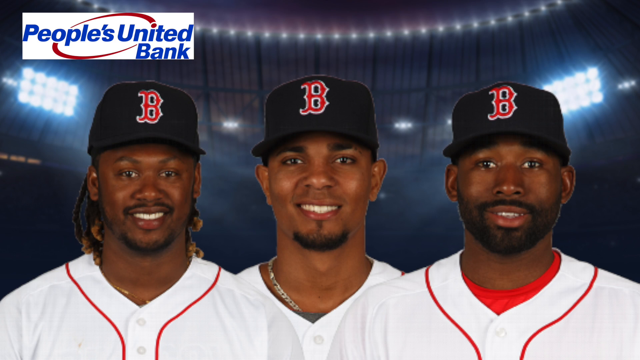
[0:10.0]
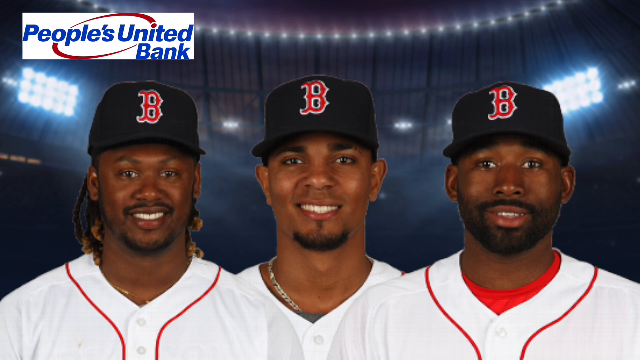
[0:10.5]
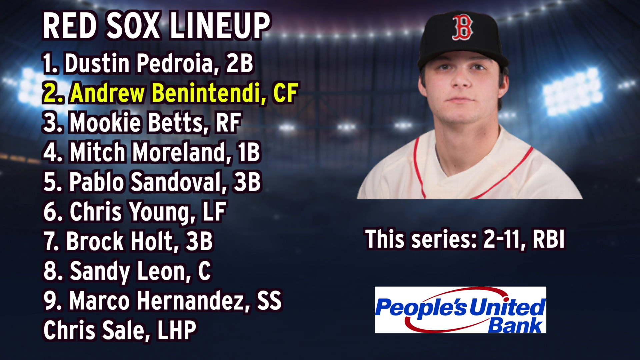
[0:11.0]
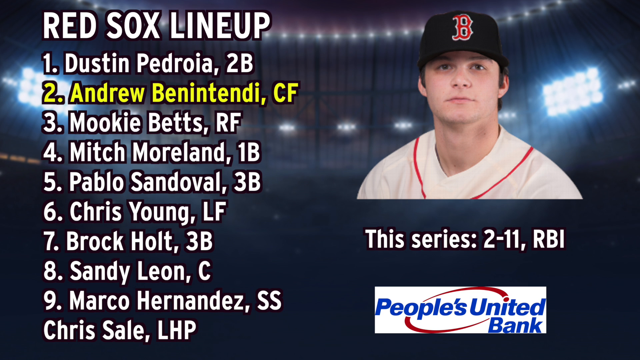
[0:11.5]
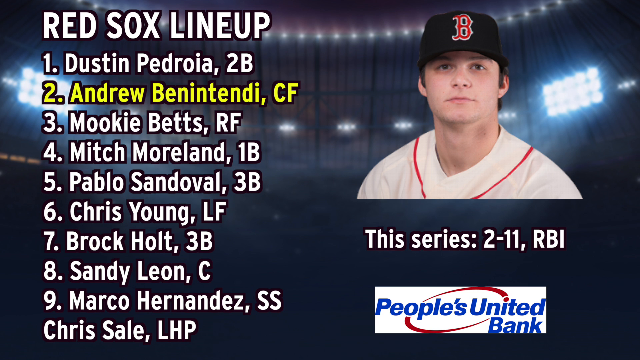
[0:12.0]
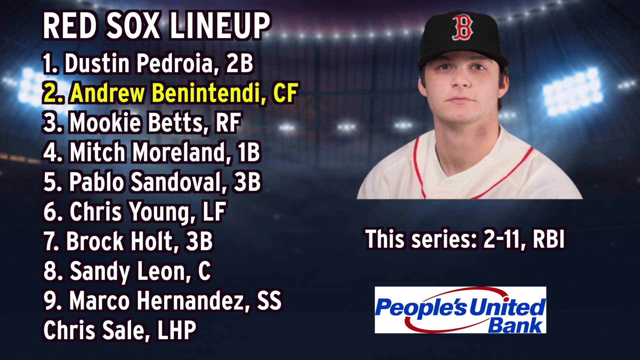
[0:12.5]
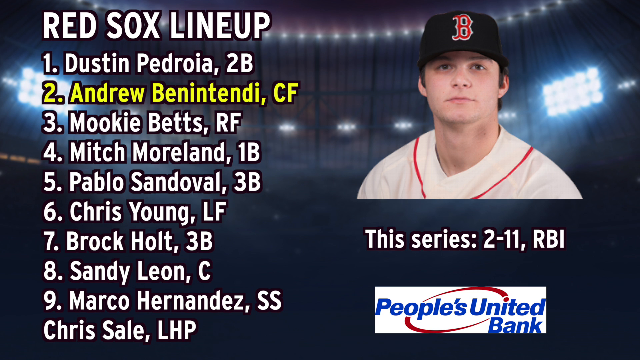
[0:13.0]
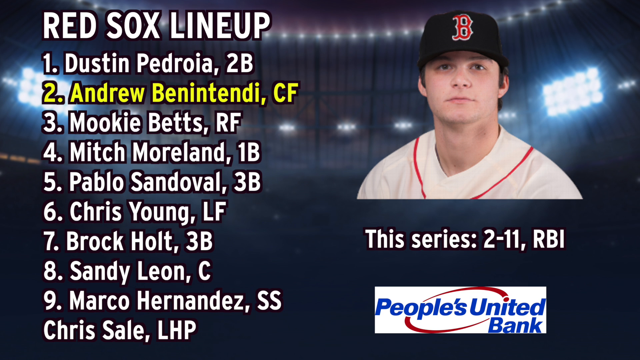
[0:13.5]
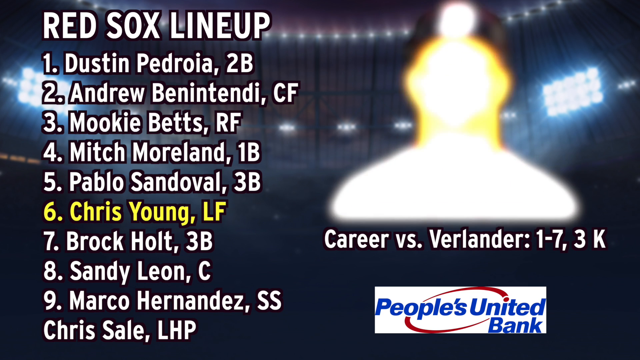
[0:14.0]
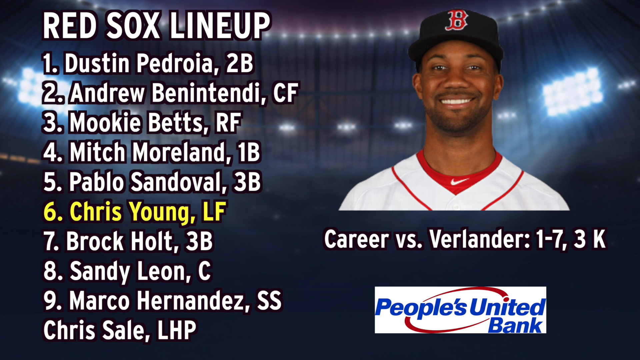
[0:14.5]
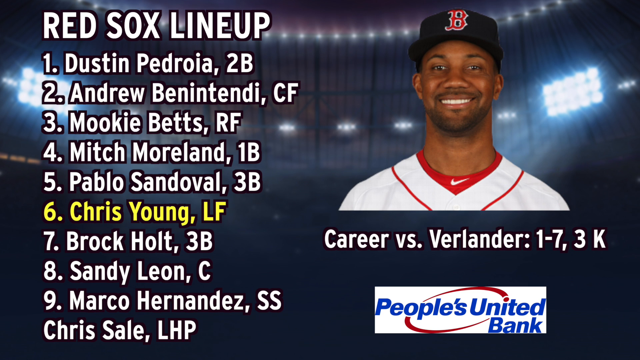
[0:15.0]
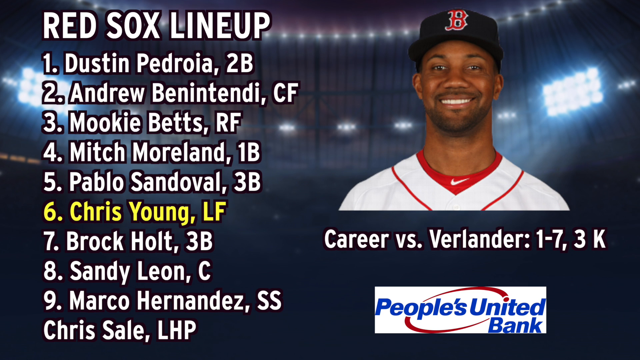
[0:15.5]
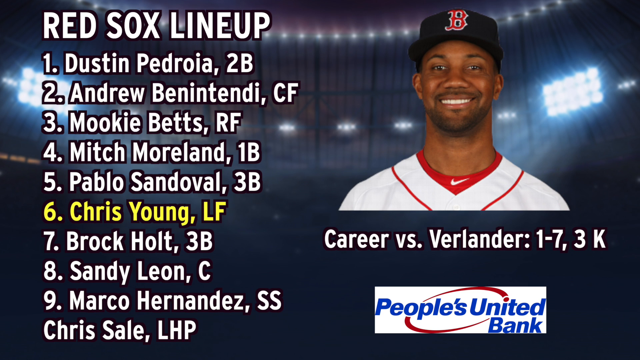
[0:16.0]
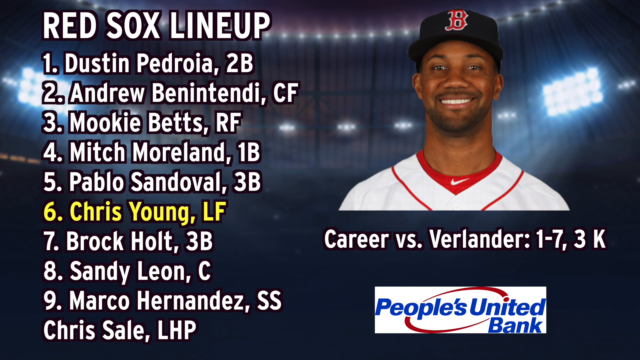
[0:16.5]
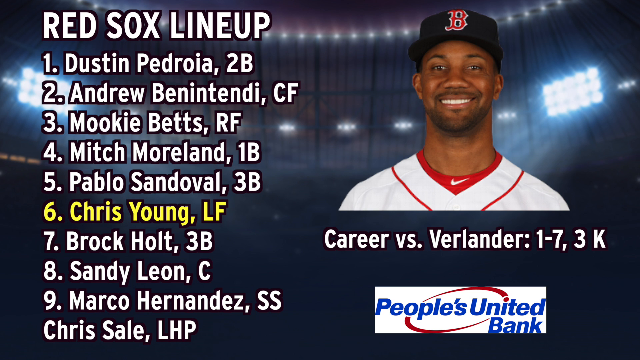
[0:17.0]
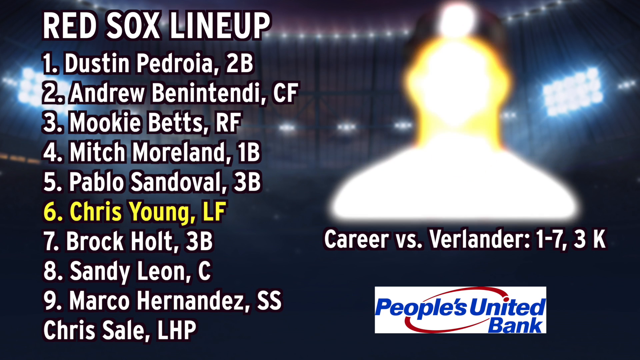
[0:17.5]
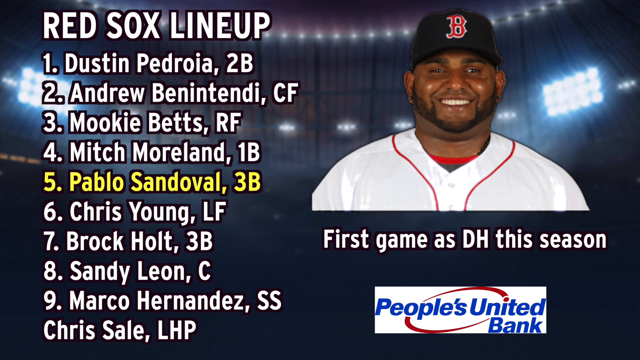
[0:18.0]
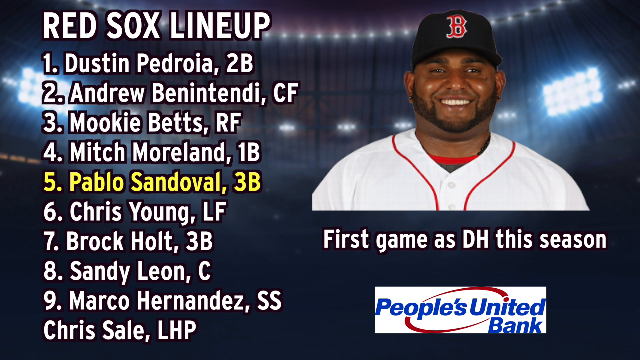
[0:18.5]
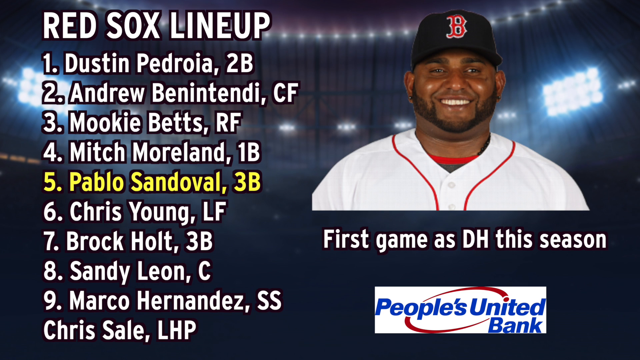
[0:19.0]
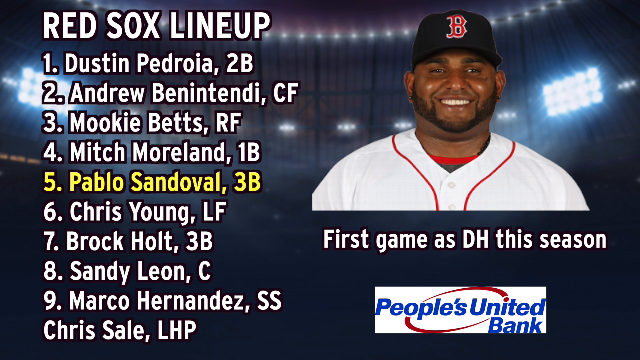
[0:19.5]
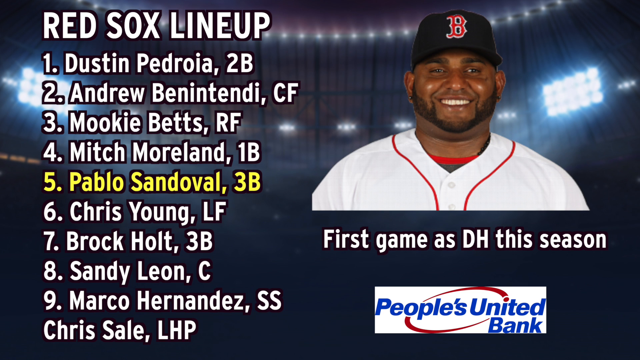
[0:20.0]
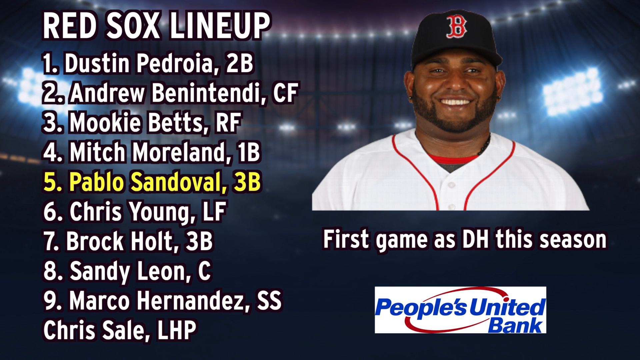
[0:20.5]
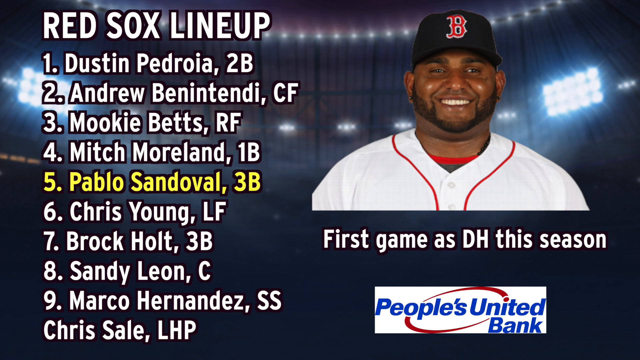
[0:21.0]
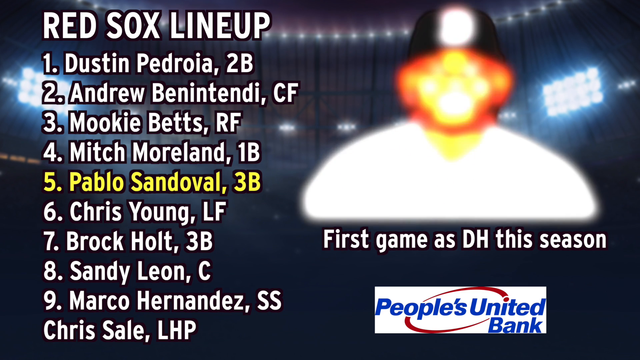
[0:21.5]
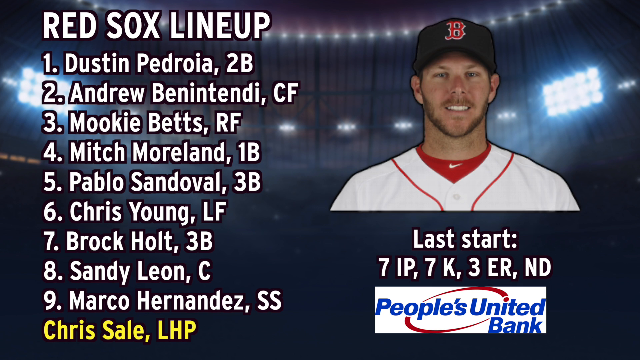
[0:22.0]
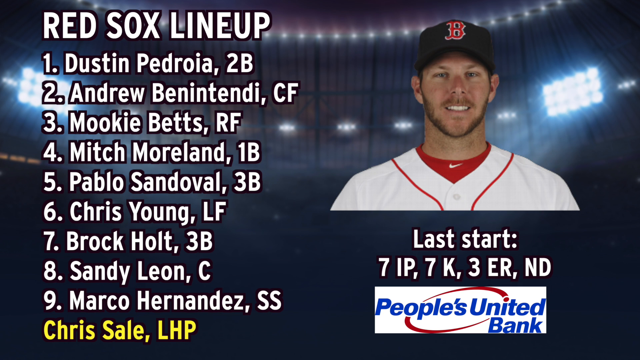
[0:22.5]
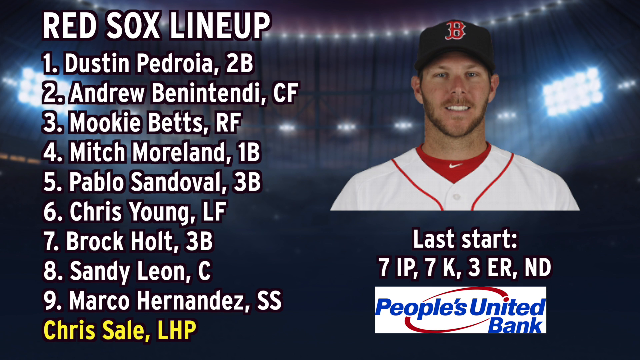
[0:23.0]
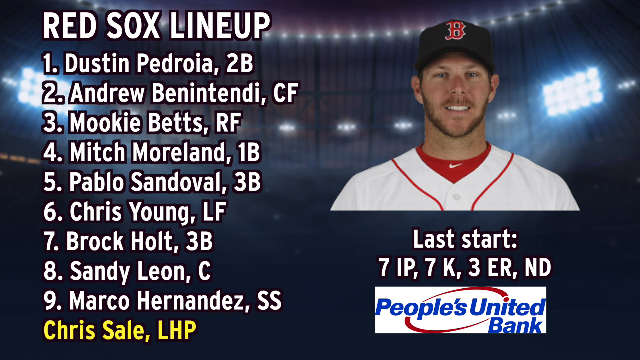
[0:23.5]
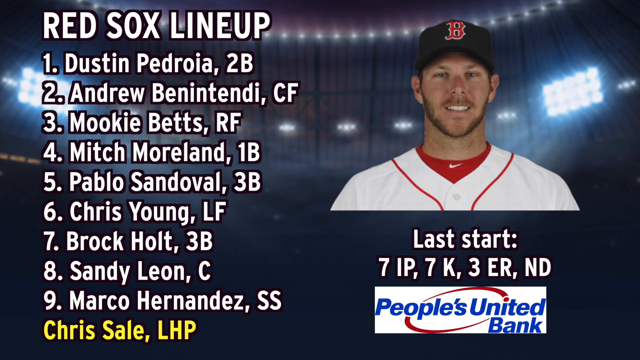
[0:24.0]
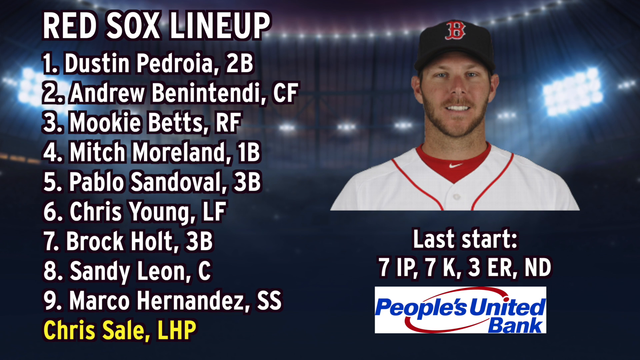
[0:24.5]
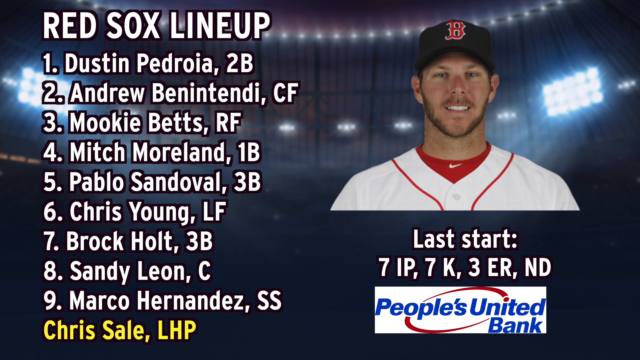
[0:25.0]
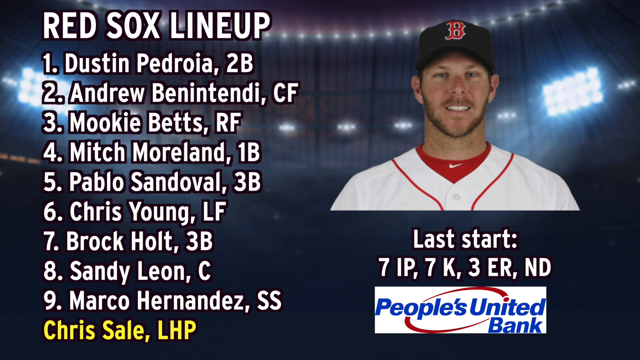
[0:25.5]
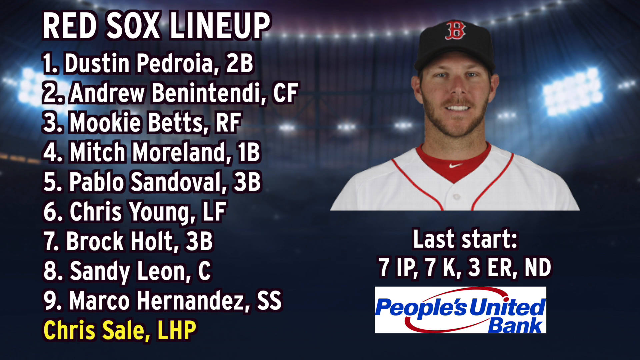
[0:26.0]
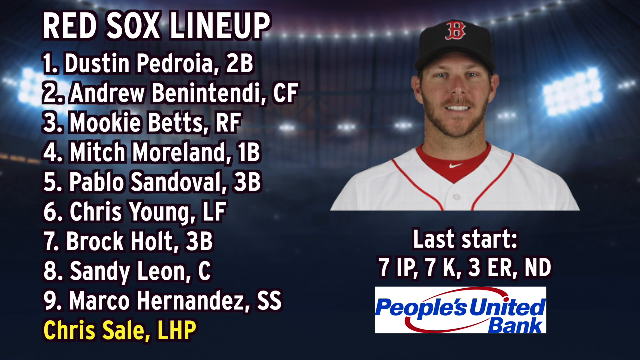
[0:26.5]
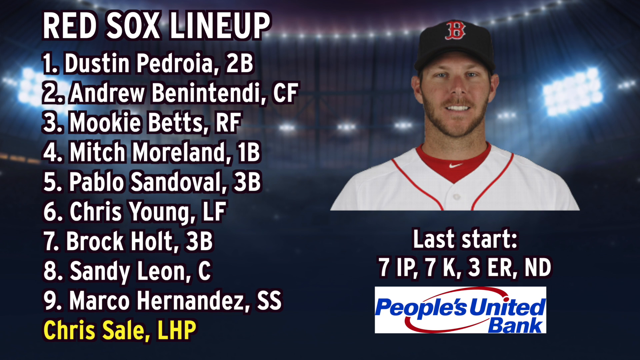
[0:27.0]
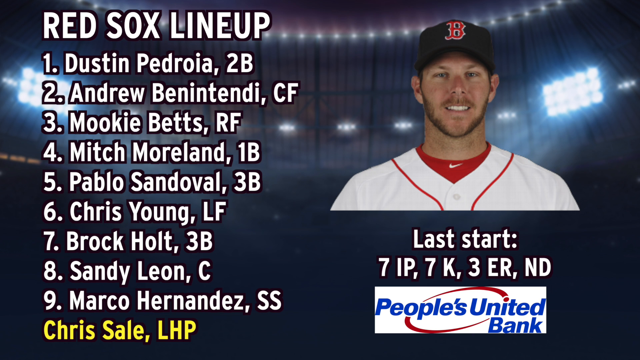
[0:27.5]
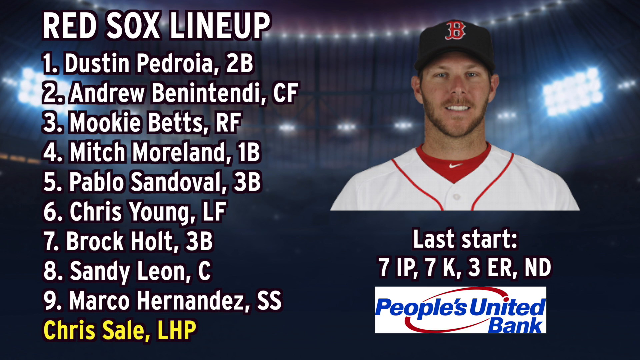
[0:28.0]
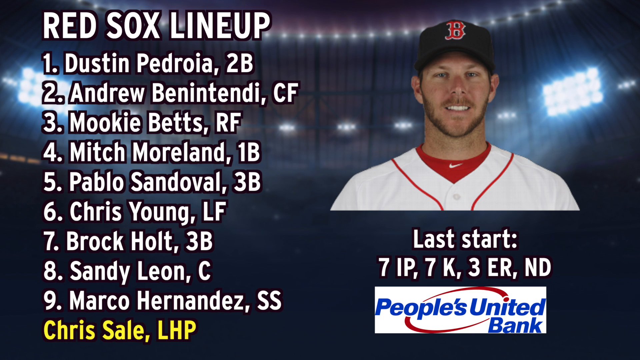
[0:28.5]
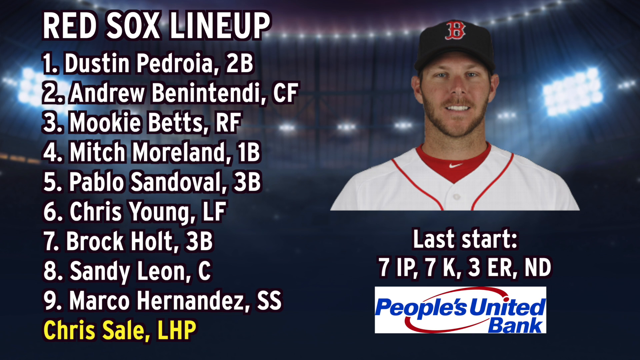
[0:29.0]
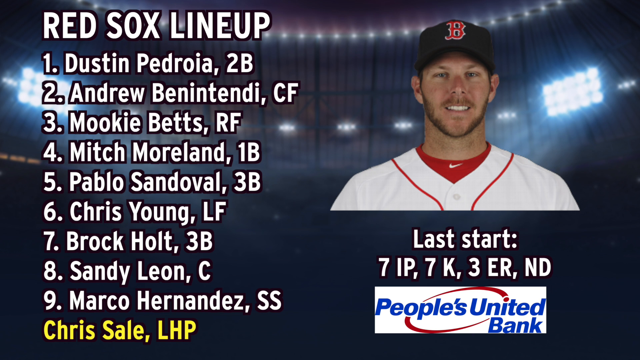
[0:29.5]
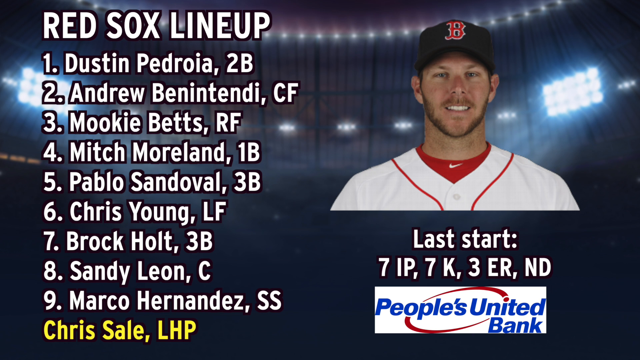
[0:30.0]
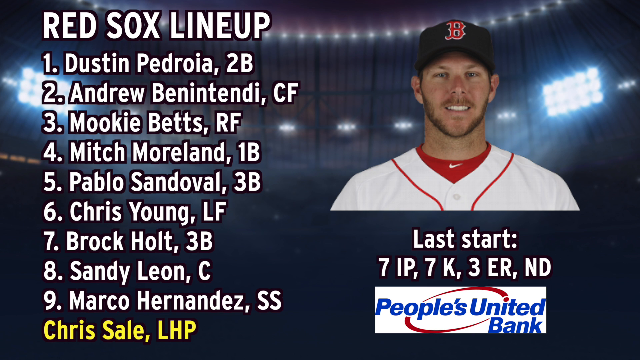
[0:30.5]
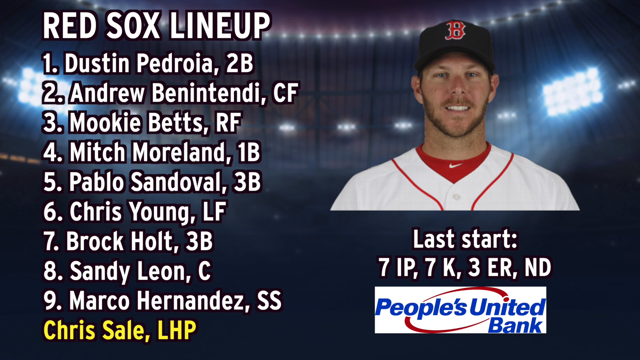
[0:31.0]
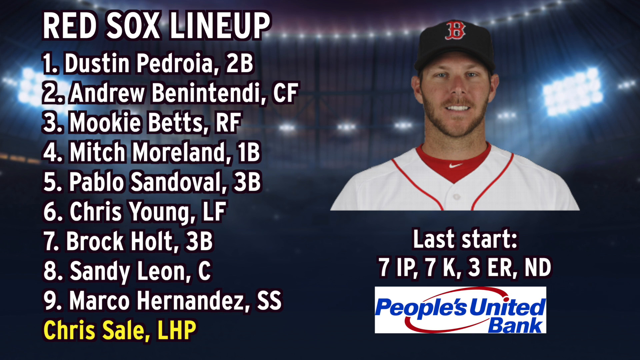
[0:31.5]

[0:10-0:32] The three baseball players appear briefly. They are African American, with a red B on each of their black baseball caps, and they wear white jerseys with red detailing. A People's United Bank logo is in the top left of the screen. The video quickly cuts to a list of 10 names under the heading "Red Sox lineup": number one, "Dustin Pedroia, 2B"; number two, in yellow font, "Andrew Benintendi, CF"; number three, "Mookie Betts, RF"; number four, "Mitch Moreland, 1B"; number five, "Pablo Sandoval, 3B"; number six, "Chris Young, LF"; number seven, "Brock Holt, 3B"; number eight, "Sandy Leon, C"; number nine, "Marco Hernandez, SS"; and a last name with no number, "Chris Sale, LHP". The whole list is in white font except number two, which is yellow. To the right of the lineup is a picture of a white man in the same black baseball cap with a red B, also wearing a white jersey with red lining. Under his picture it says "this series 2-11 RBI", and below that is a red, white and blue People's United Bank logo.